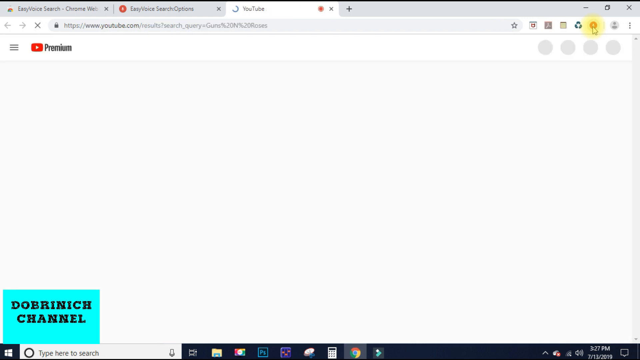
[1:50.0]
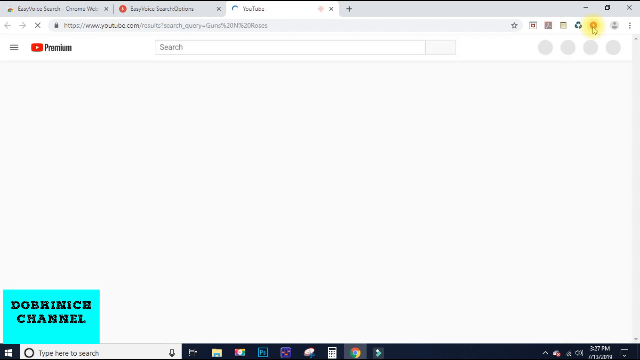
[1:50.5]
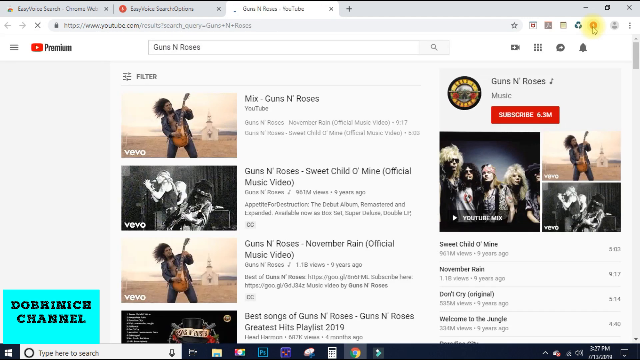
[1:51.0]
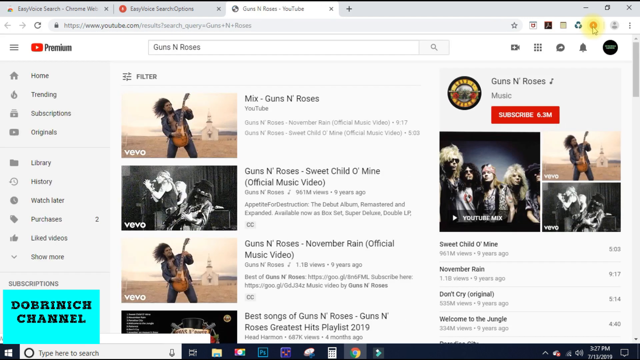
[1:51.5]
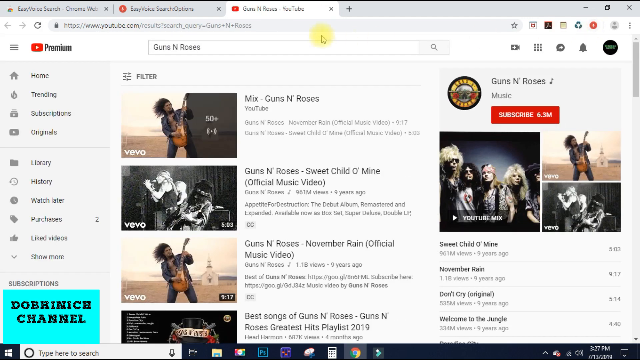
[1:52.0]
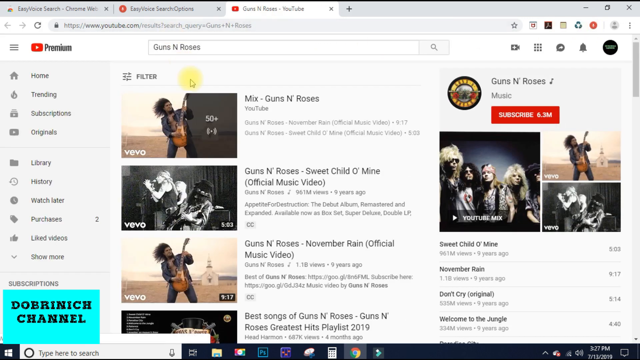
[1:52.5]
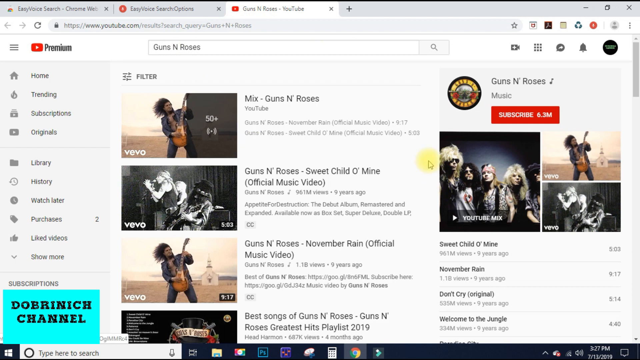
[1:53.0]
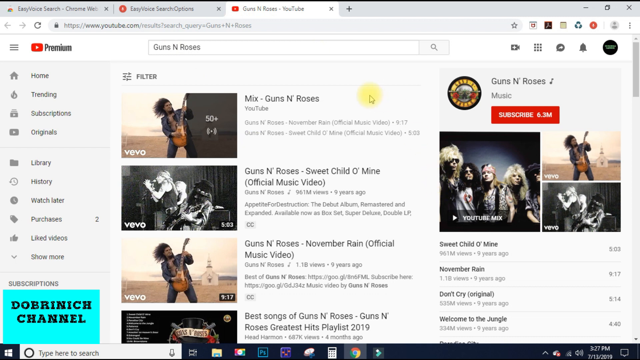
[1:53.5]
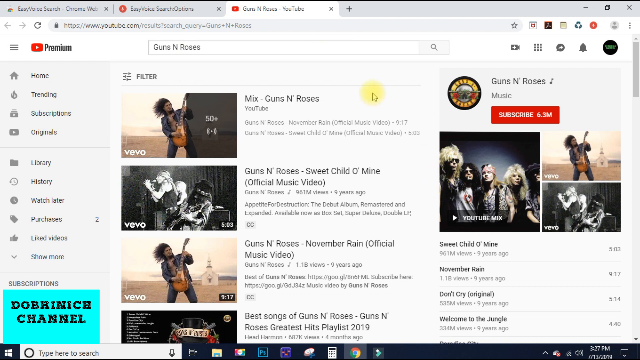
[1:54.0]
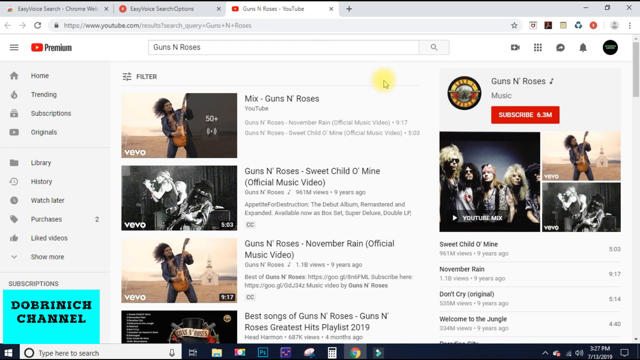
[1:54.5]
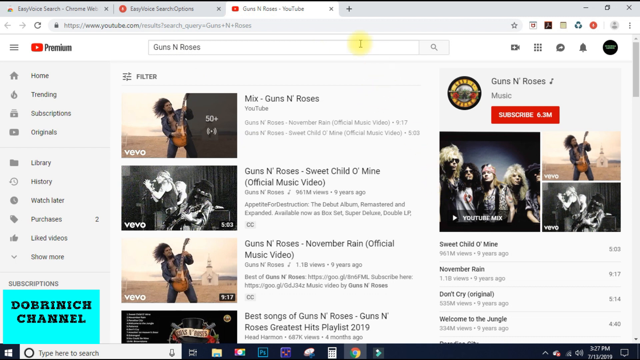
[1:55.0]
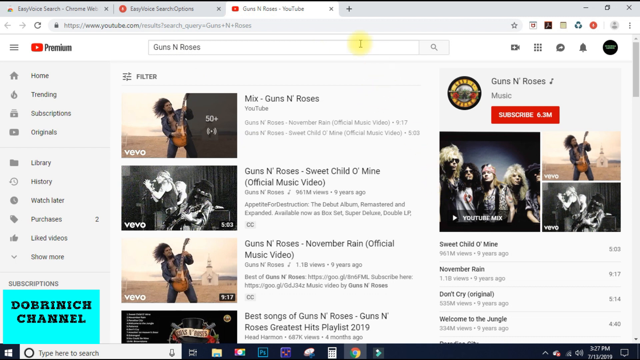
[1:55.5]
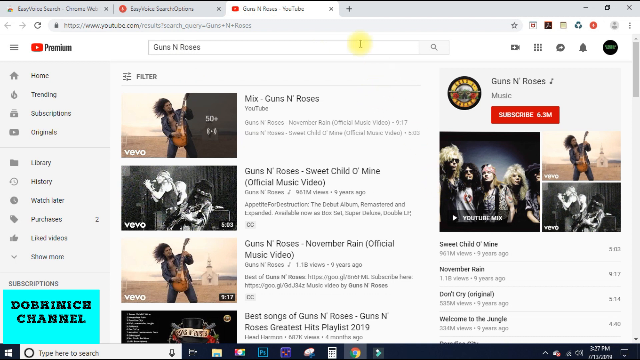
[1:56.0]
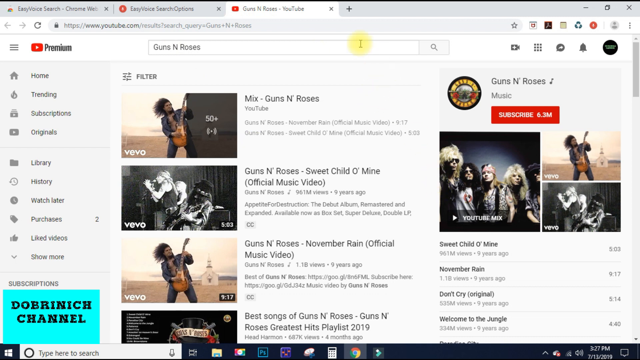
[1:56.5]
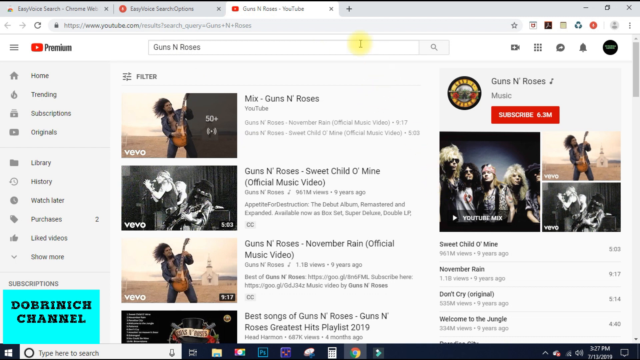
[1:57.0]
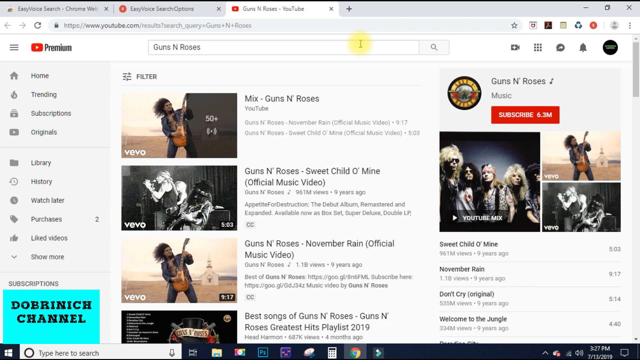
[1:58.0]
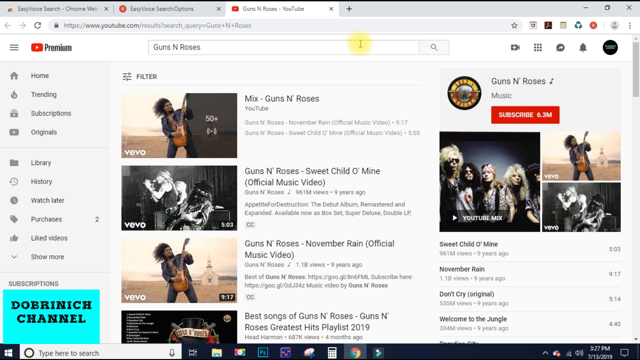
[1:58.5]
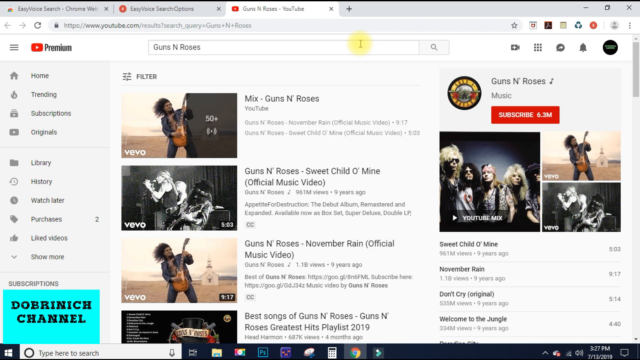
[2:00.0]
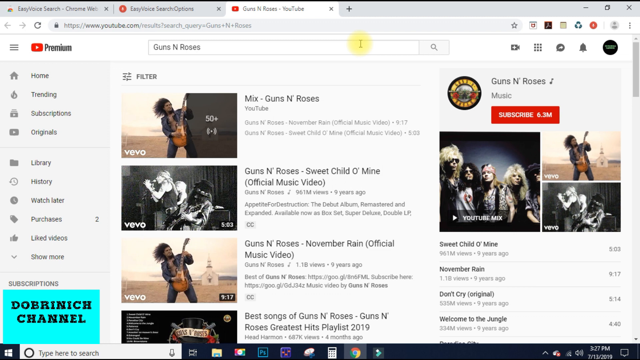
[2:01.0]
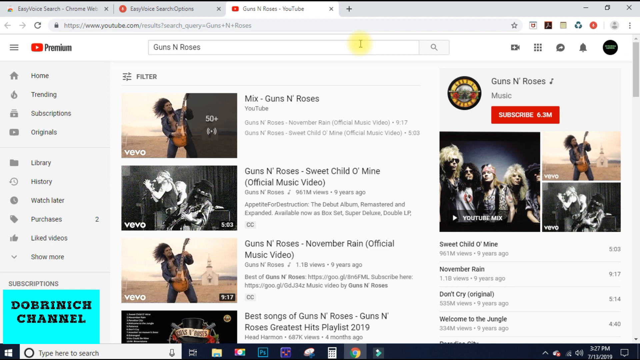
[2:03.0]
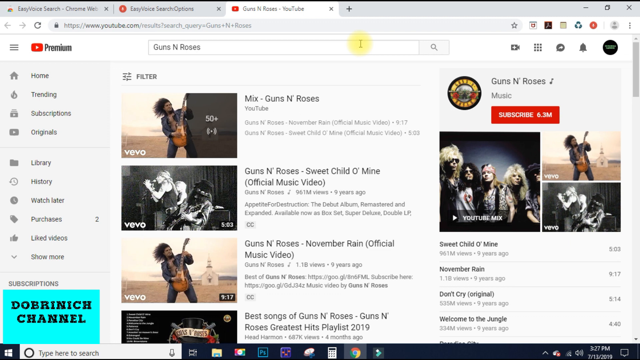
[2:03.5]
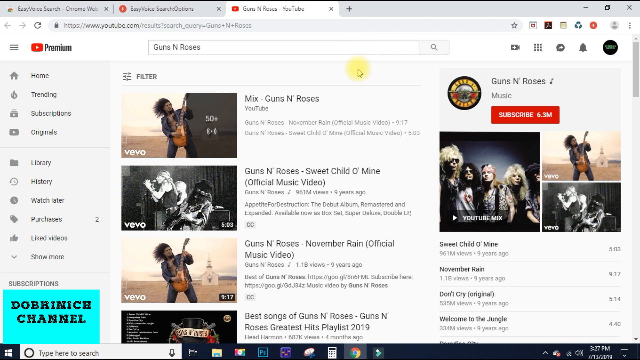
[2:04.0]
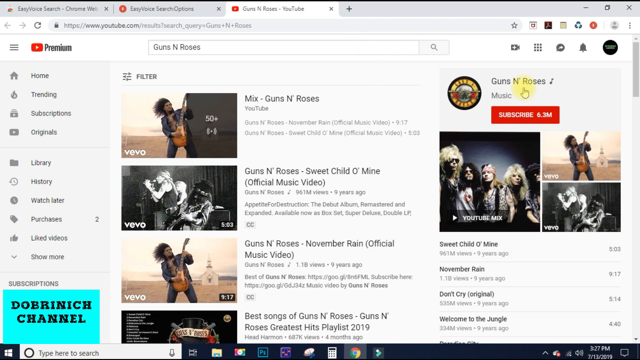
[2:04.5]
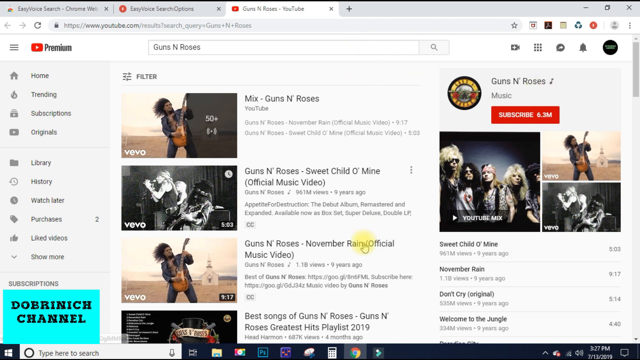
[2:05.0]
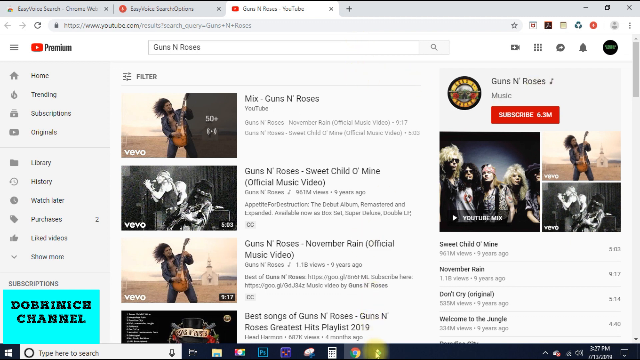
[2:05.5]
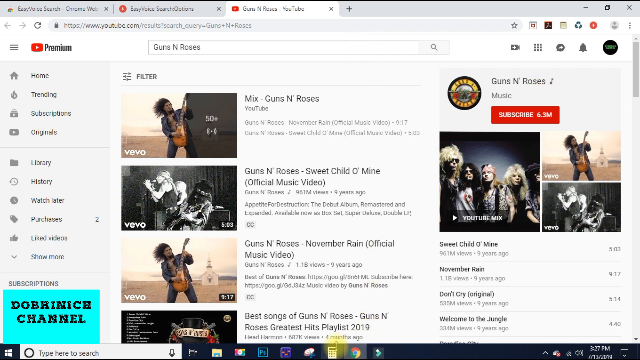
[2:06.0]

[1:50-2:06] The person speaks "guns and roses" into the search, and that text appears on the screen, automatically searching guns and roses on YouTube. The words go into the search bar, and a variety of Guns and Roses videos appear below, including their channel on the right-hand side and music videos such as Sweet Child of Mine and November Rain. There is also a mix at the top that can be selected to bring up a variety of Guns and Roses songs. The person keeps hovering the mouse over the search bar at the top, which stays yellow. The "premium" writing next to the YouTube logo in the top left shows the person has YouTube Premium. On the right-hand side are pictures of Guns and Roses playing the guitar and the subscribe logo.